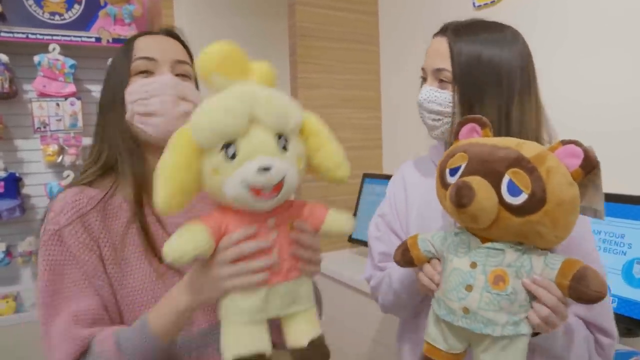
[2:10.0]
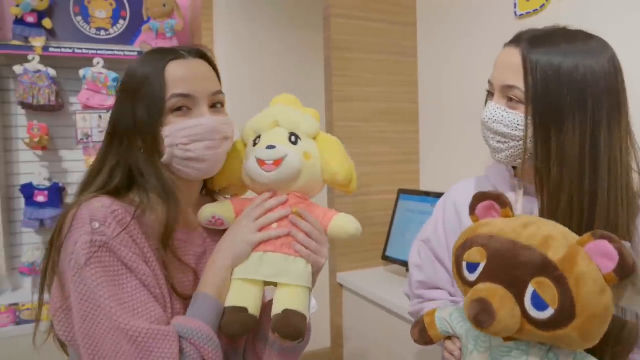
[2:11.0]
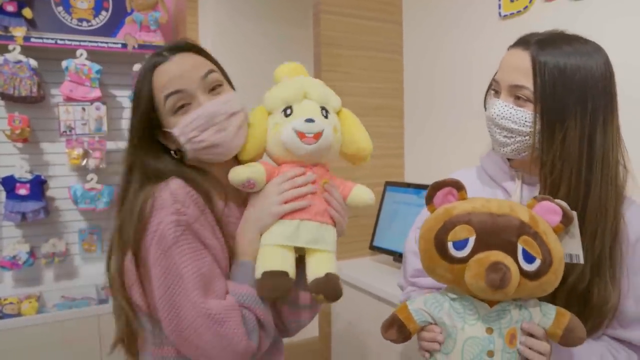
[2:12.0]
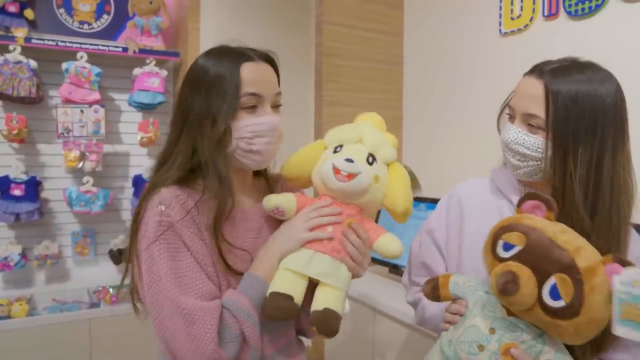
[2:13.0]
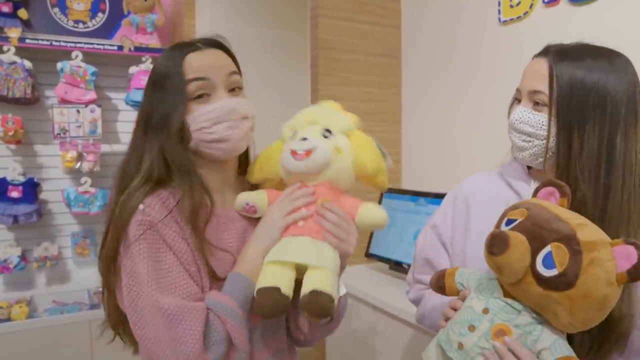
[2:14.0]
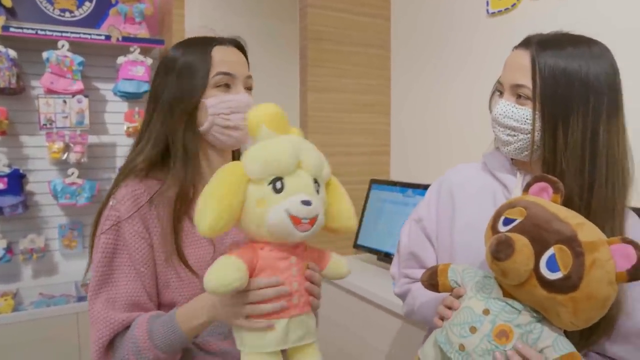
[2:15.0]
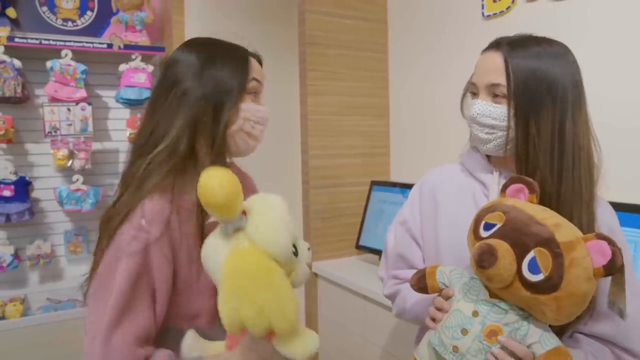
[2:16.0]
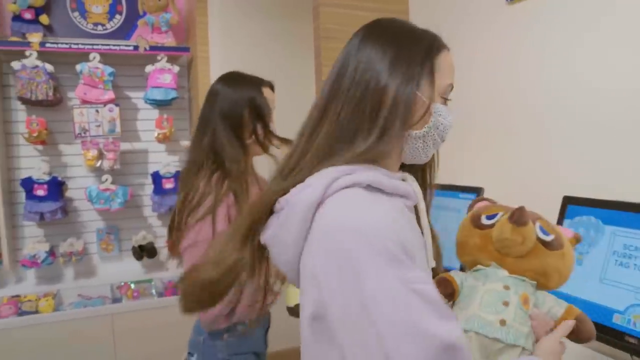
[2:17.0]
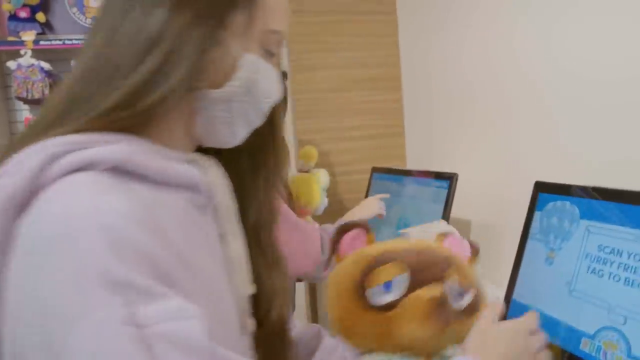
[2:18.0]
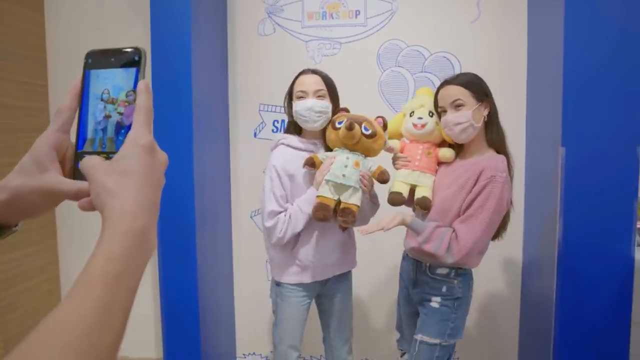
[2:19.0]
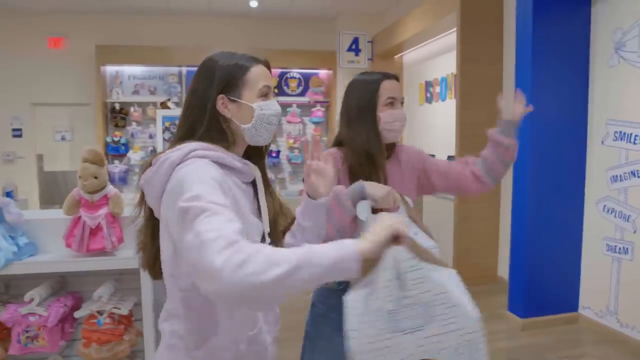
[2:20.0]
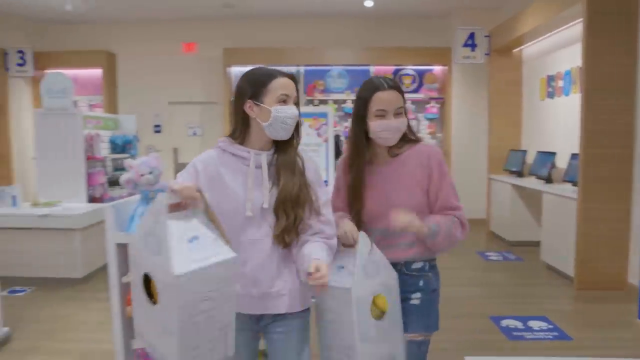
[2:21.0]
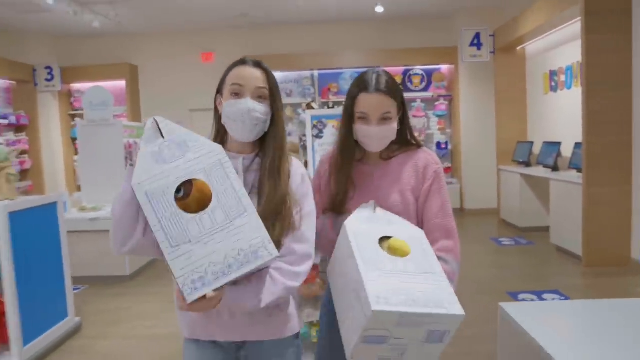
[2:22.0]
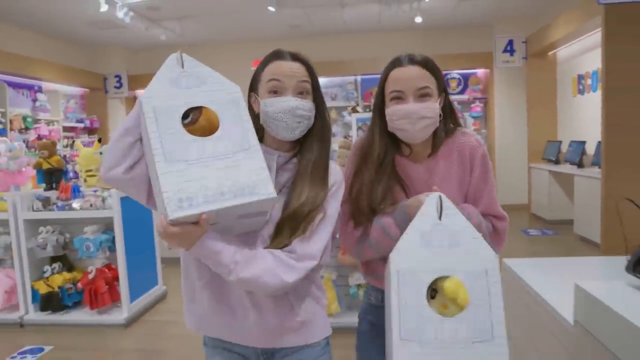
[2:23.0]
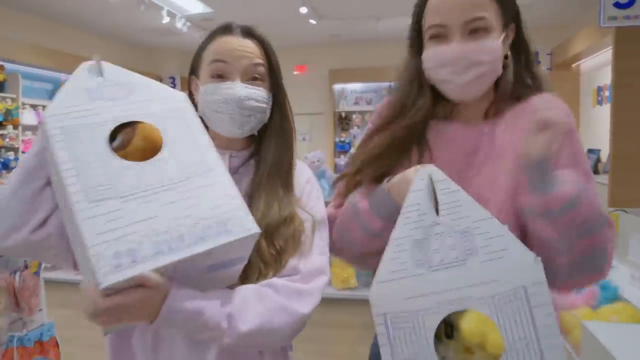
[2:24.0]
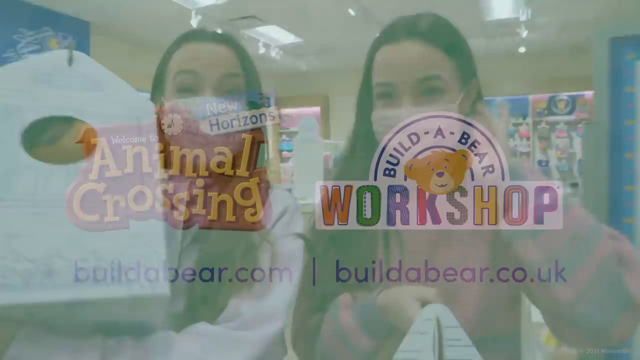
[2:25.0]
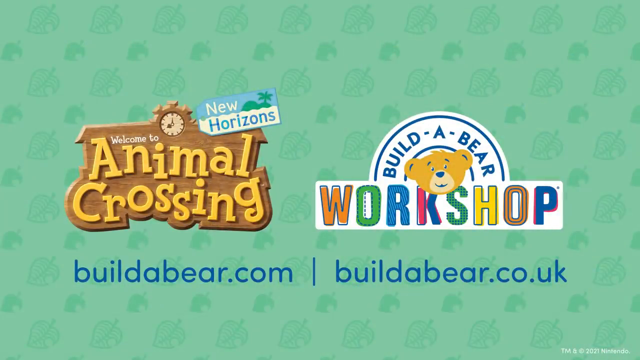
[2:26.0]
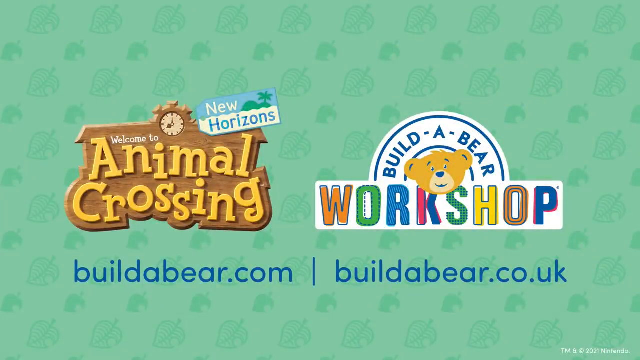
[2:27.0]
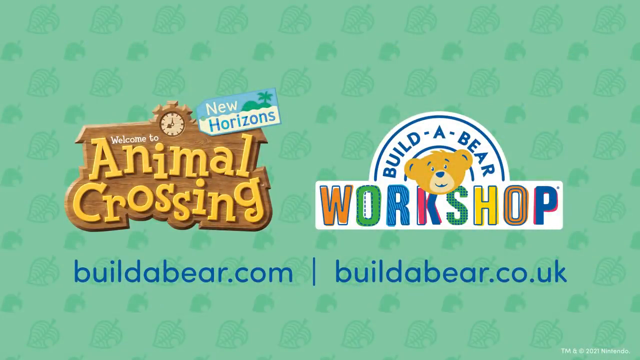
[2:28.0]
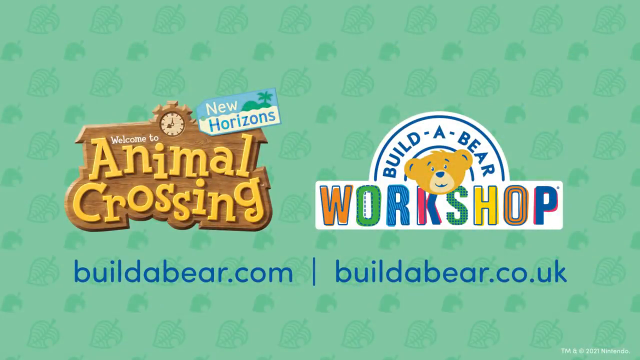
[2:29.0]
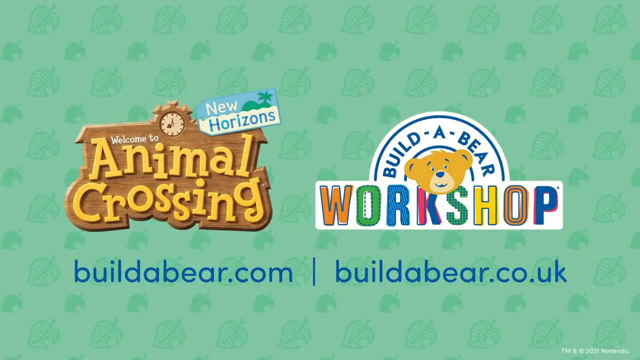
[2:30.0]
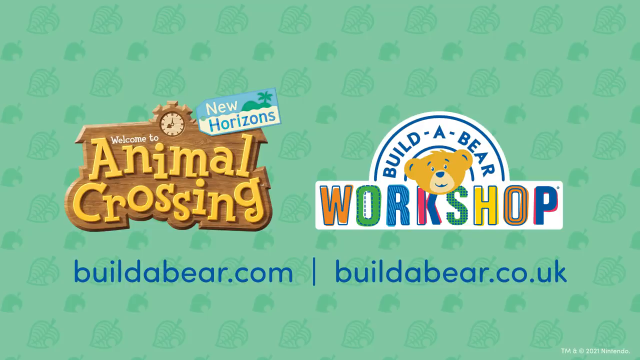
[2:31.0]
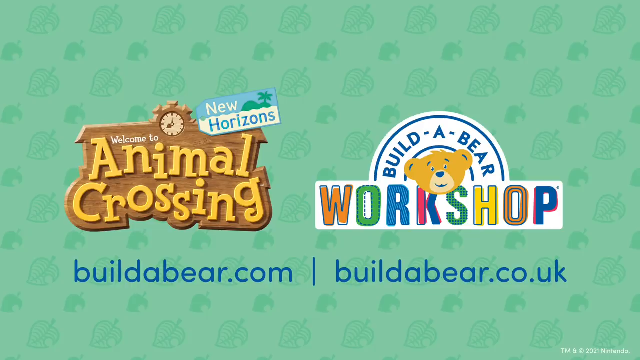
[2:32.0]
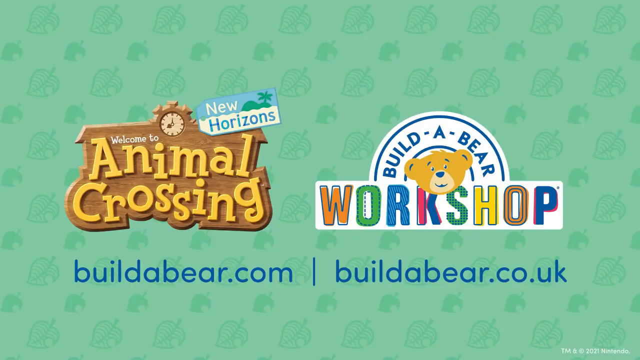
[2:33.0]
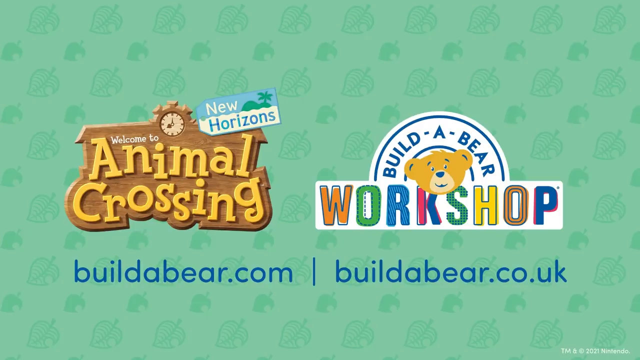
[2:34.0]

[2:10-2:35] The two women show their teddy bears to a computer monitor, turn around, and exchange cuddles, looking very excited and happy. They pose for a picture while someone takes a photo of them with a phone. The teddy bears are wrapped back in their boxes, and the women are given the boxed teddy bears. They appear to walk out of the shop, waving goodbye to the shop attendant. At the end of the video an advertisement appears with the text "New Horizons", "Welcome to Animal Crossing", "workshops", "buildbear.com" and "buildbear.com.uk", for a Build a Bear workshop.